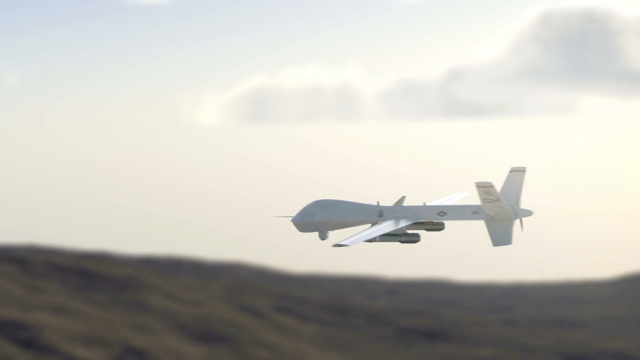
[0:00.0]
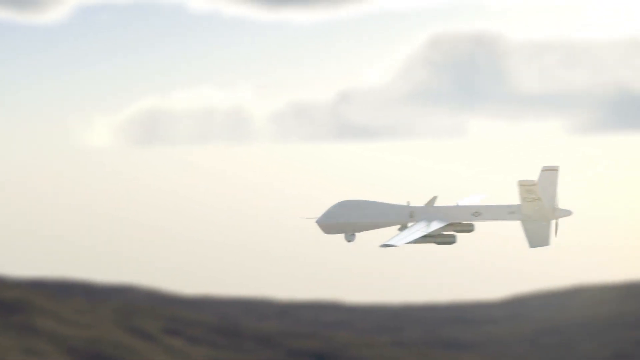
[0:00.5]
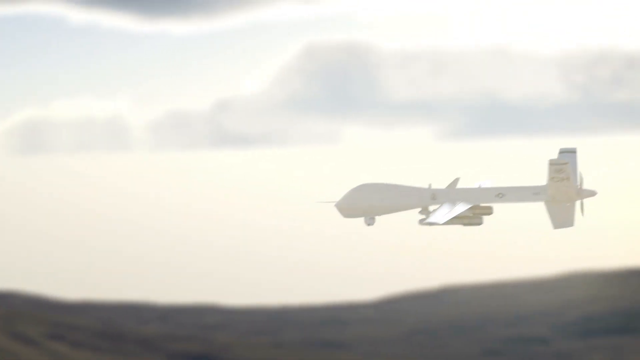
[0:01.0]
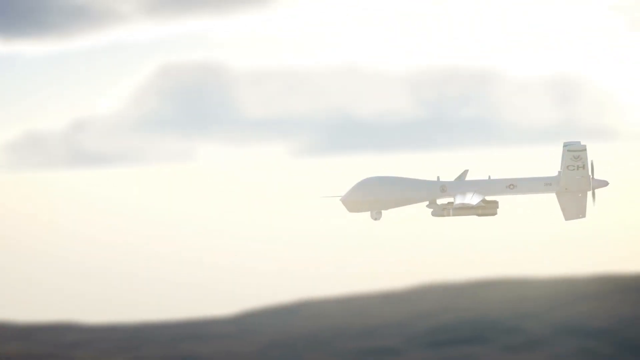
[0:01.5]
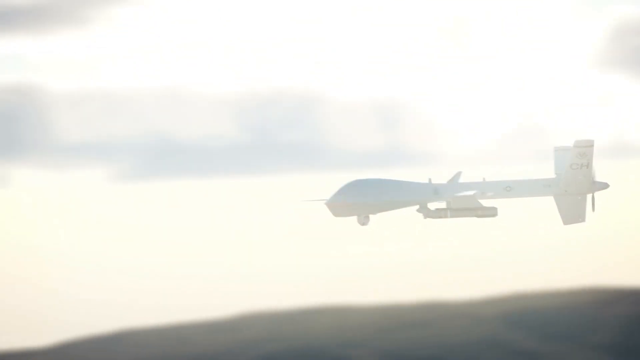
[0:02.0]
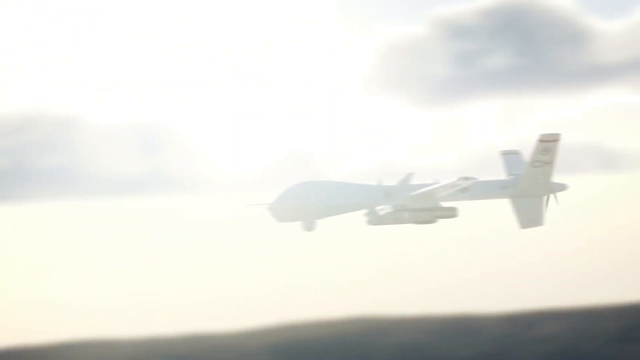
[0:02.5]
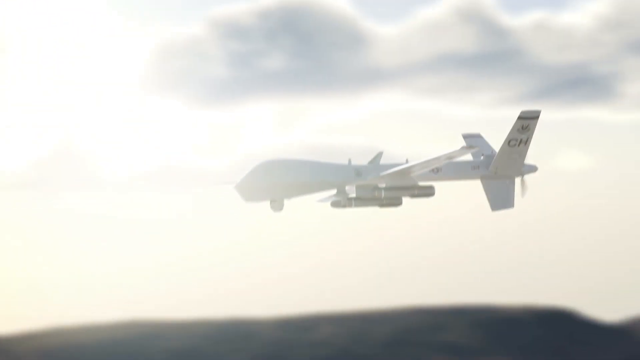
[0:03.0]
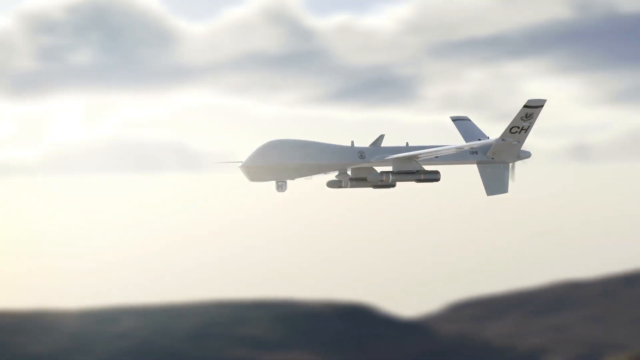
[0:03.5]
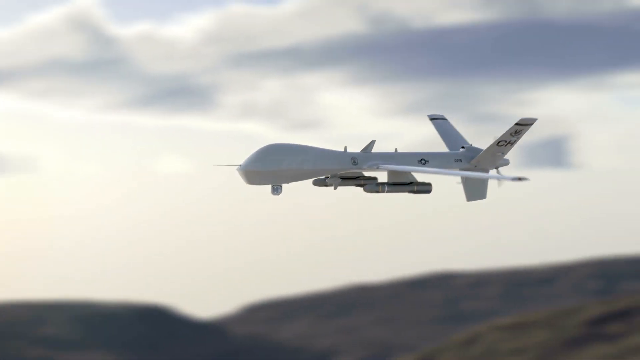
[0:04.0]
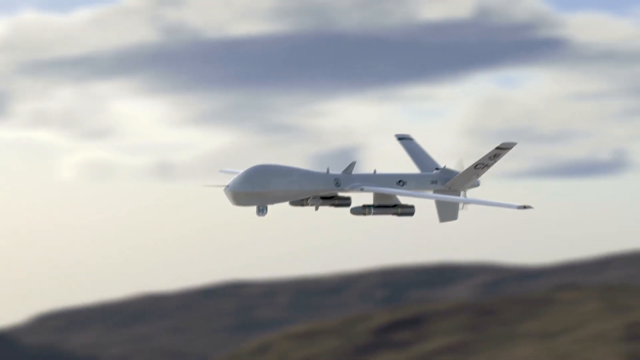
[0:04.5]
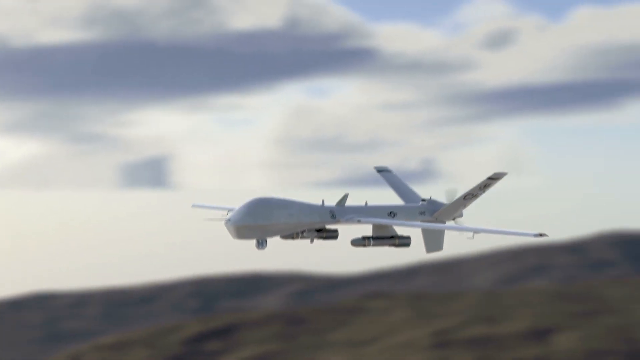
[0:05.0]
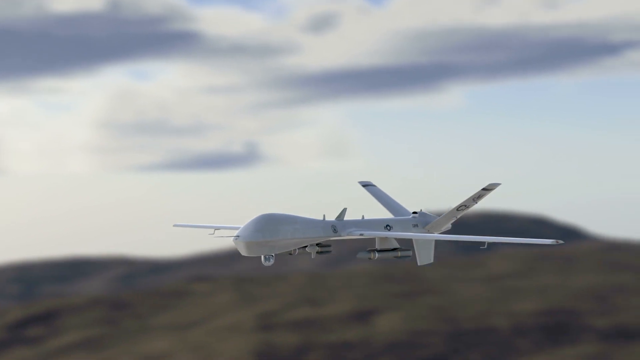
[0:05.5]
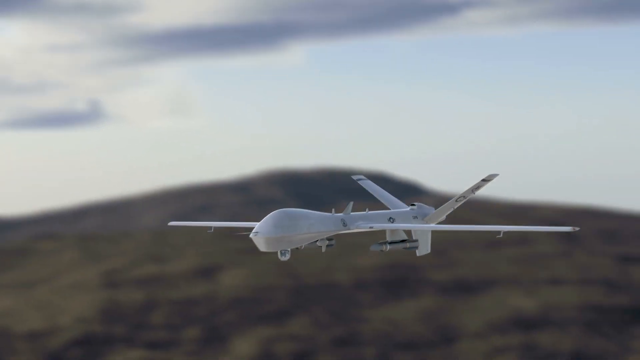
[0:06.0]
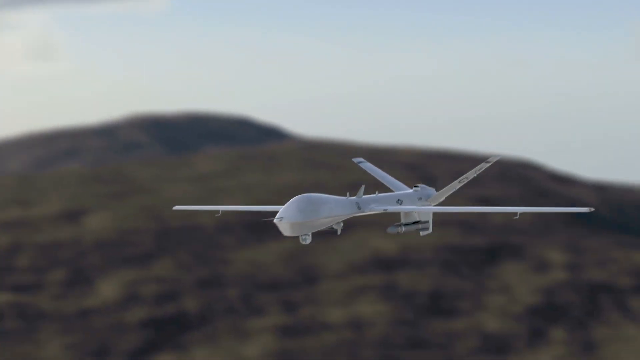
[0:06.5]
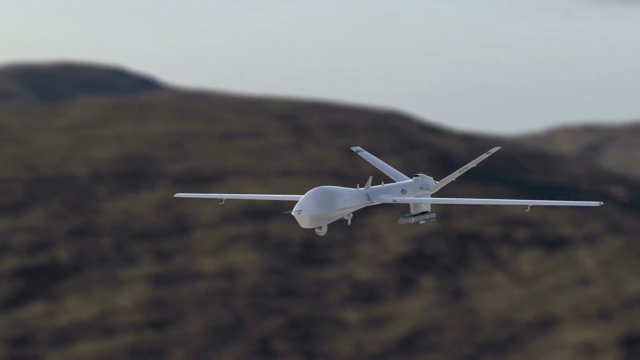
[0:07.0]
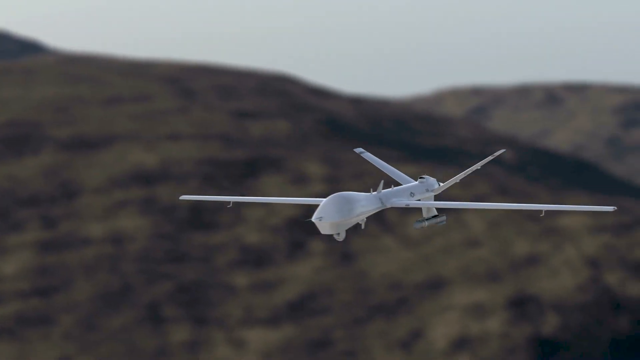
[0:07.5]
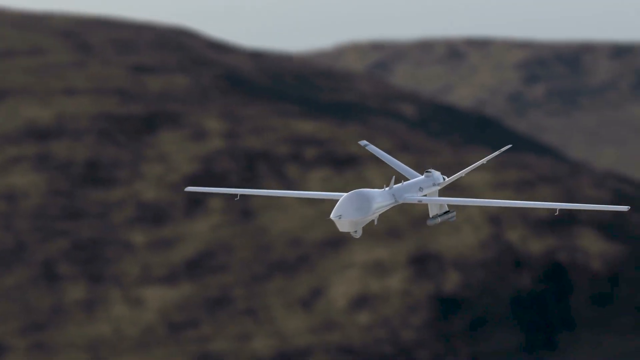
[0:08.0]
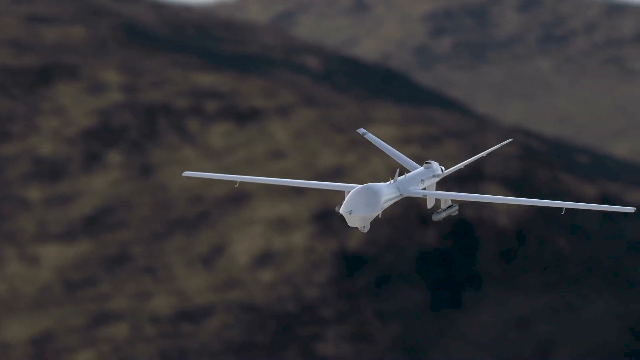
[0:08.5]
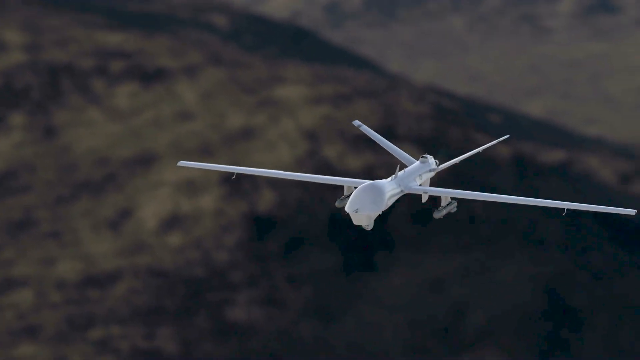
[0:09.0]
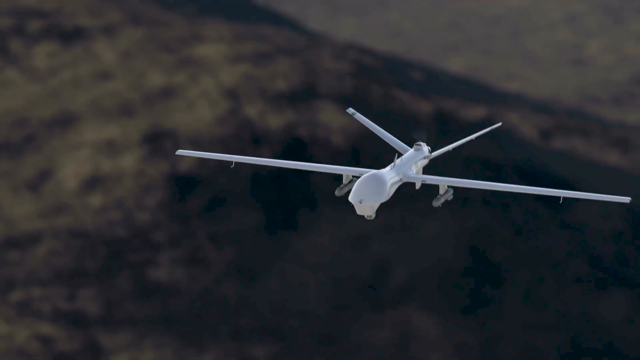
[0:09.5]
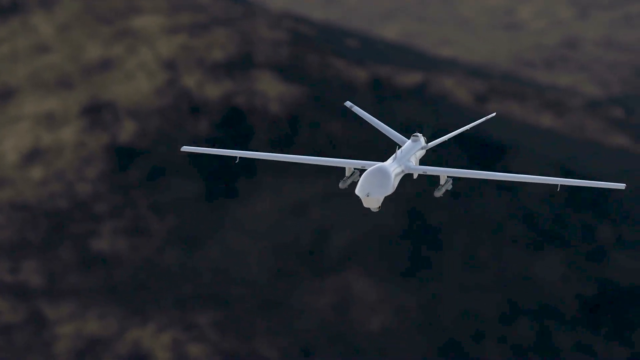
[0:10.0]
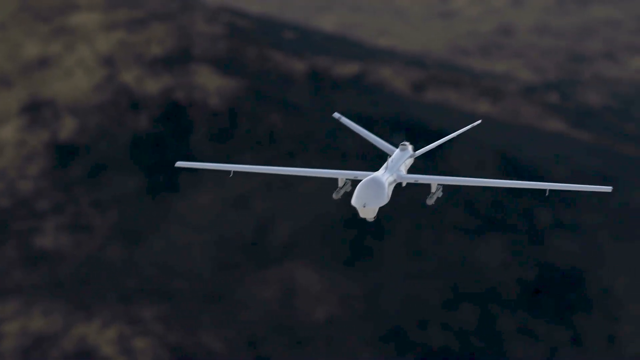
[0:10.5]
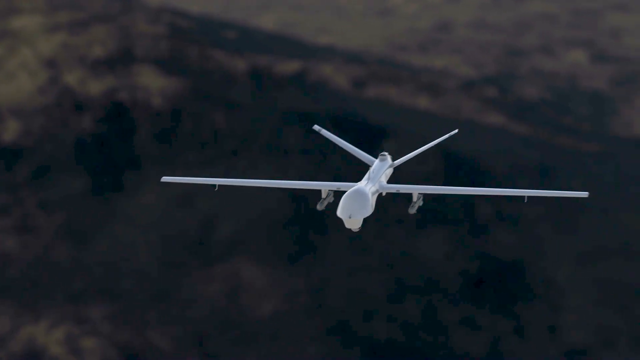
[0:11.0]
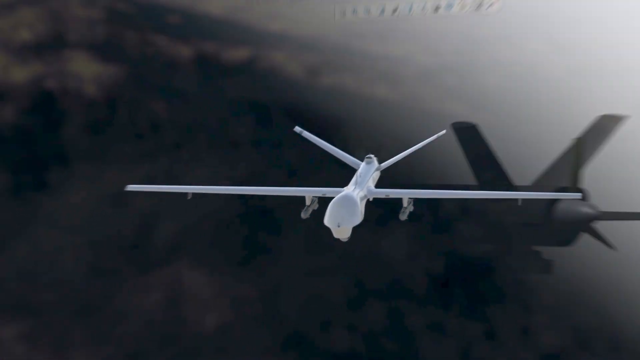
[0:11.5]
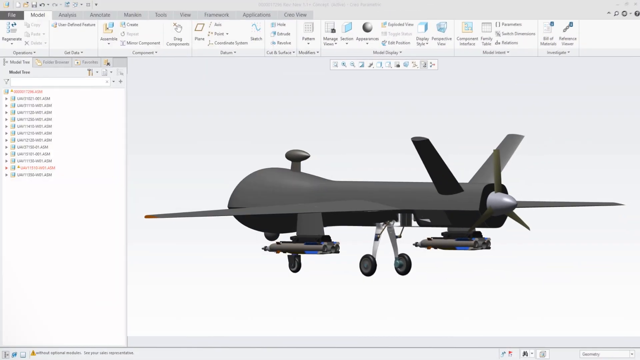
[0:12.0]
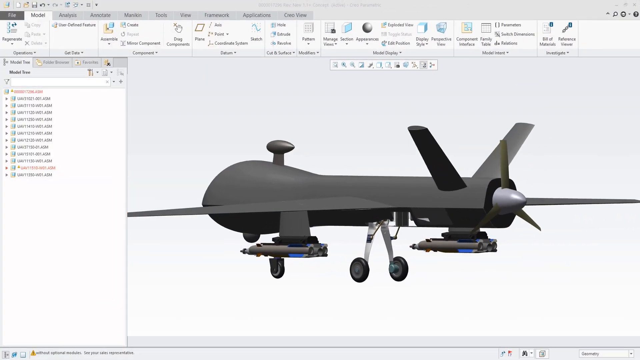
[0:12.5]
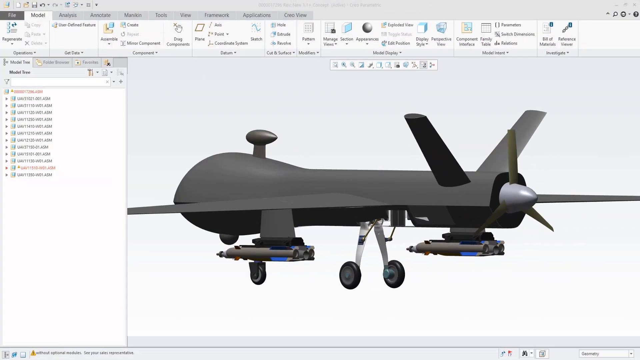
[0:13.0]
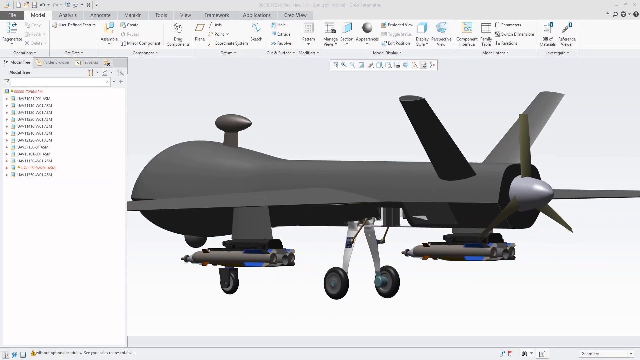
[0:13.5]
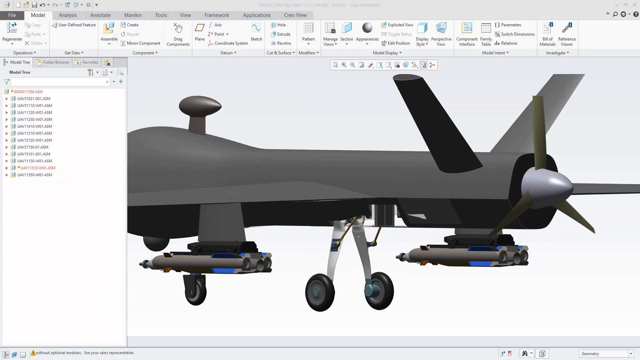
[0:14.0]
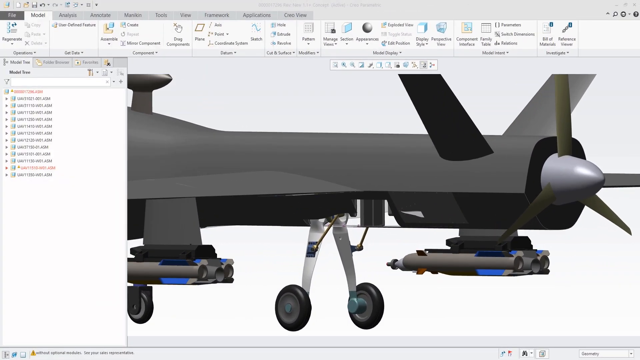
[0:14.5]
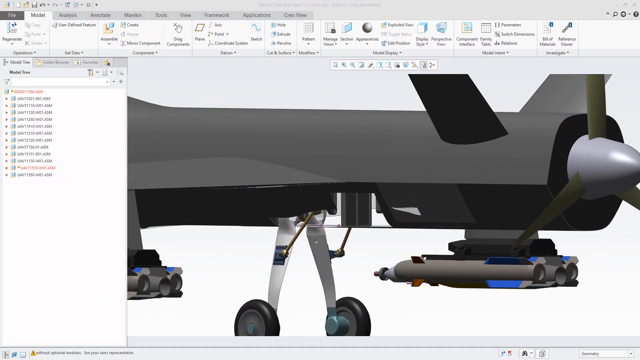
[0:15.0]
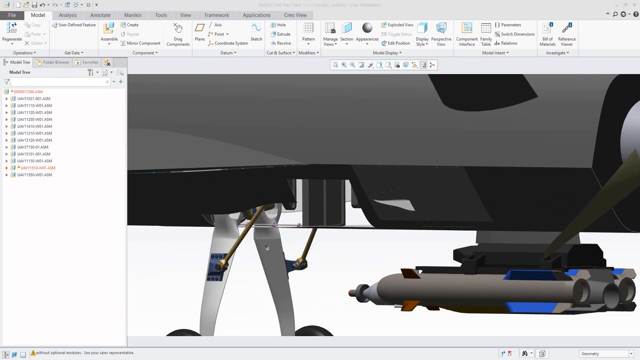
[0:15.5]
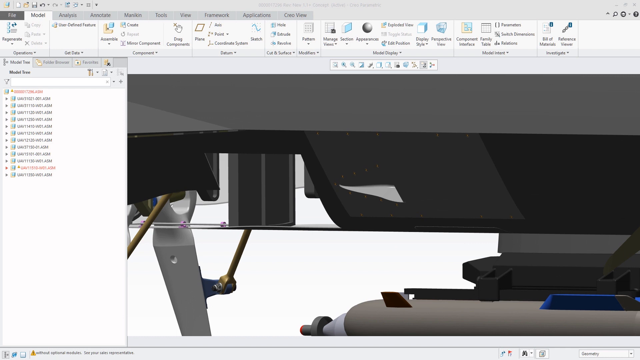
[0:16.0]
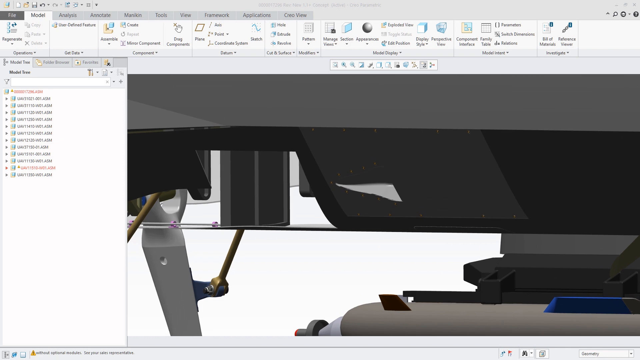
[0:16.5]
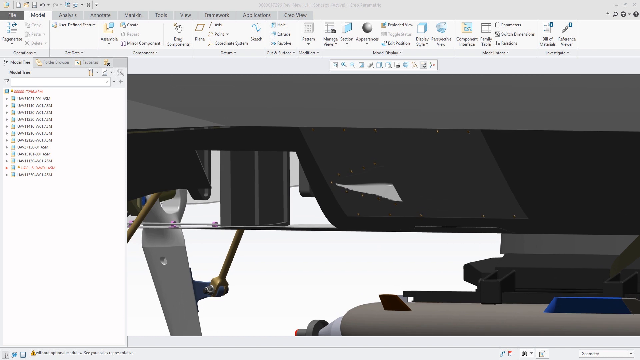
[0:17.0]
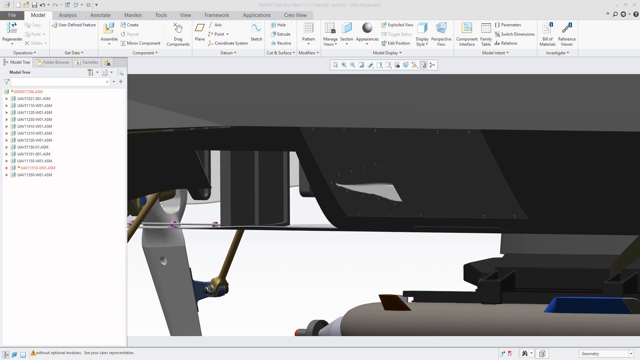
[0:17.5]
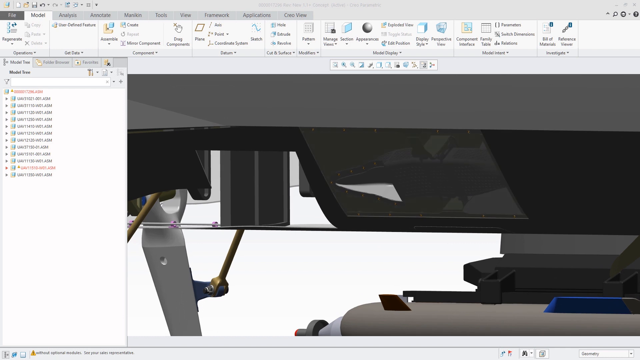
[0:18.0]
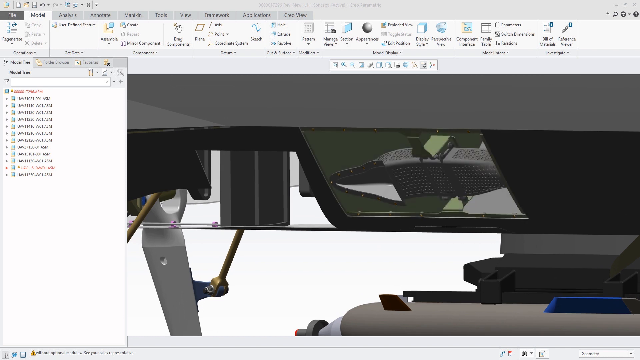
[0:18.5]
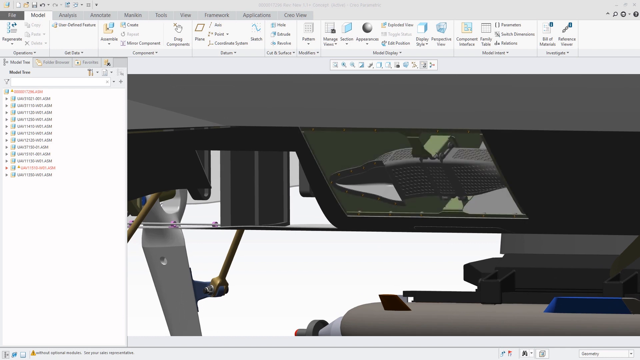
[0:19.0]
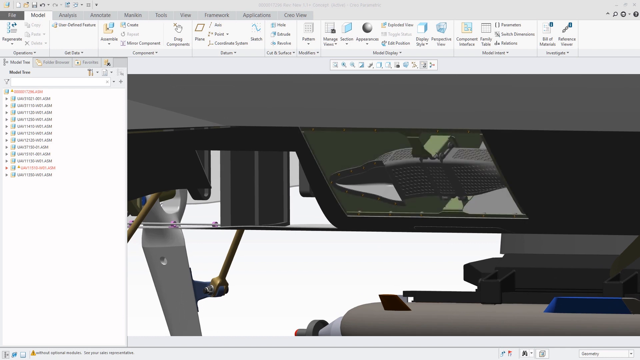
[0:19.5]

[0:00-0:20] An animation shows a drone flying backwards through the sky; as it moves backwards its front comes into view, and it goes to the right of the screen. There are clouds in a cloudy morning sky, with a mountain below. The view then changes to some sort of modeling software, where the user zooms in on the model of the same drone seen flying. Some sort of application is open. The model tab is clicked and the view zooms in towards the undercarriage of the drone, to a spot that seems to have some sort of opening or door. This area is then exposed: it goes from black to having the cover taken off, revealing a green background and some sort of unidentified interior part that is gray, green and white.